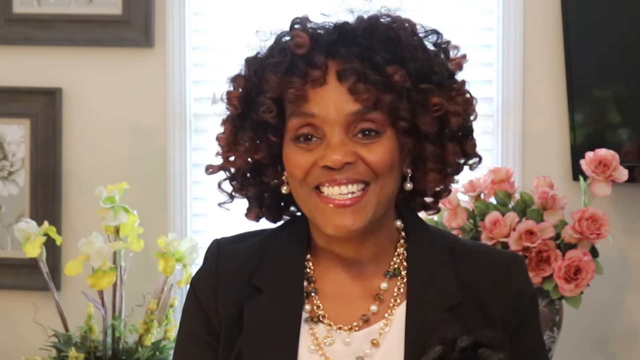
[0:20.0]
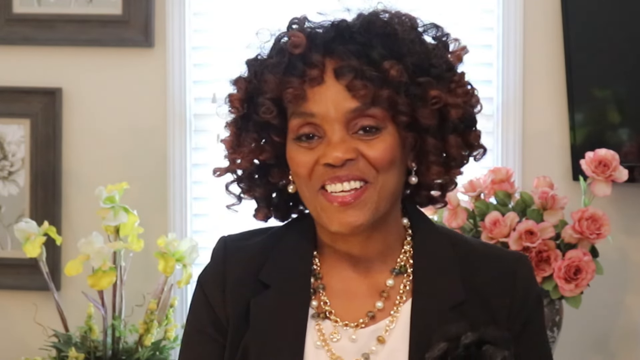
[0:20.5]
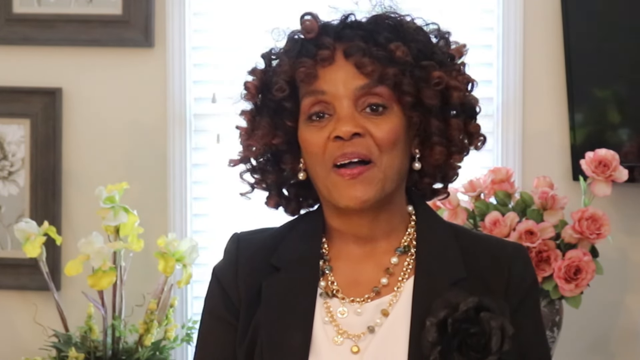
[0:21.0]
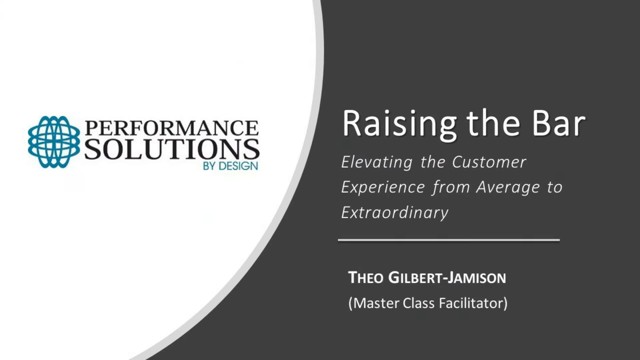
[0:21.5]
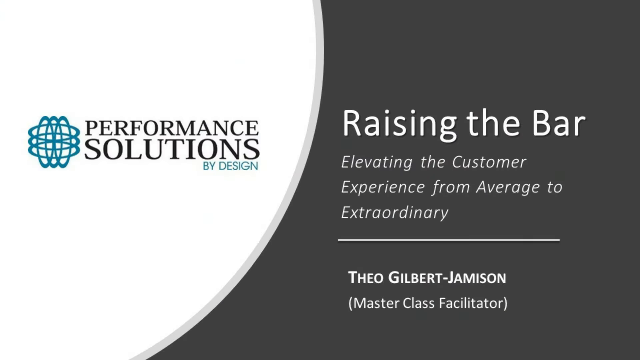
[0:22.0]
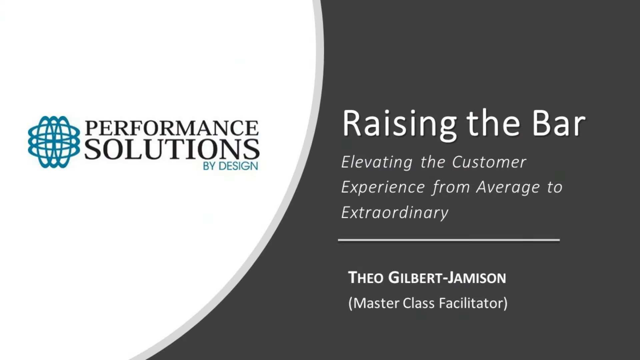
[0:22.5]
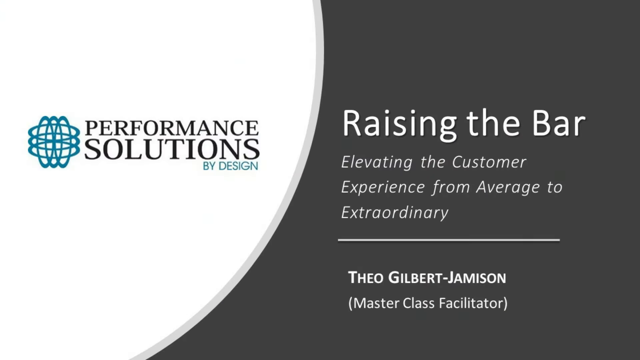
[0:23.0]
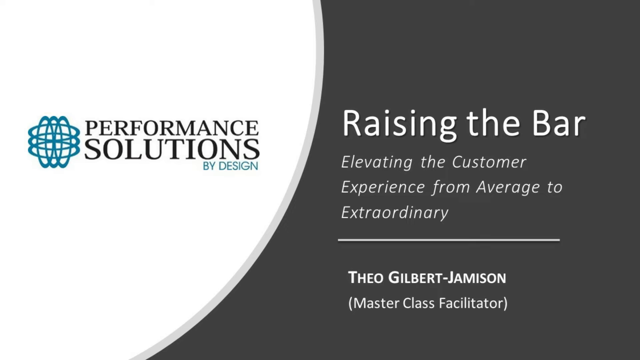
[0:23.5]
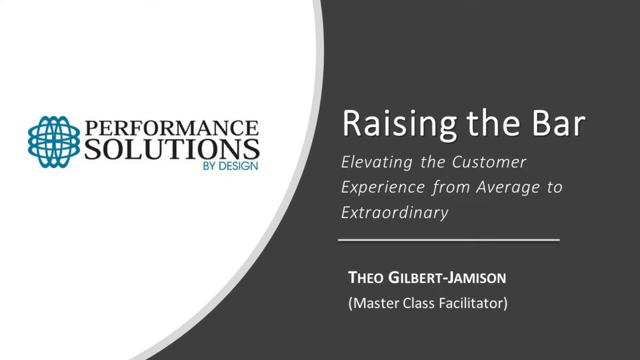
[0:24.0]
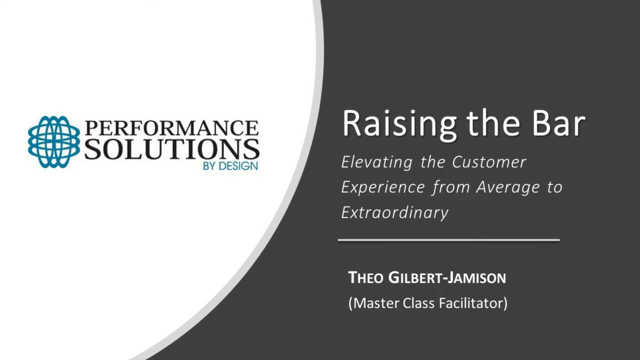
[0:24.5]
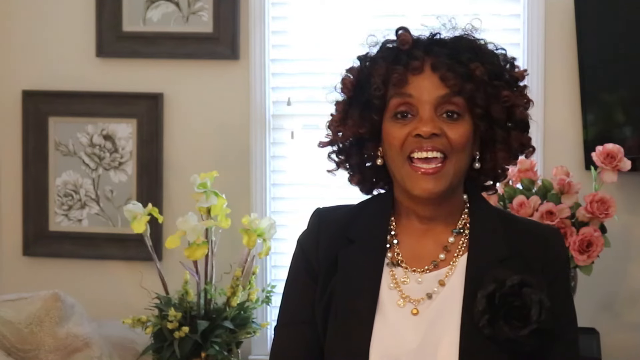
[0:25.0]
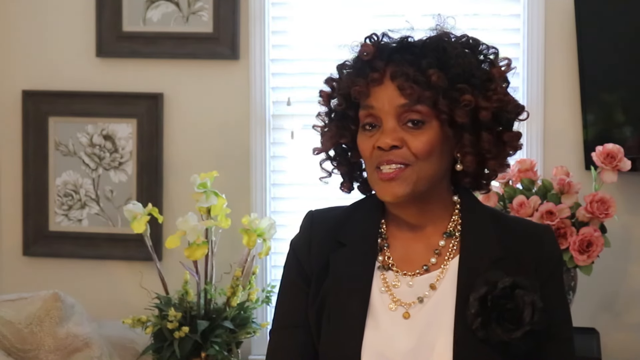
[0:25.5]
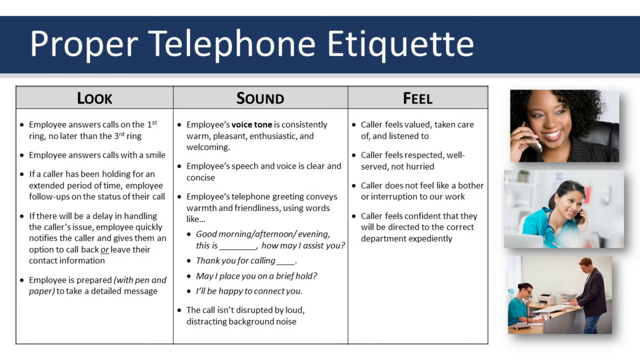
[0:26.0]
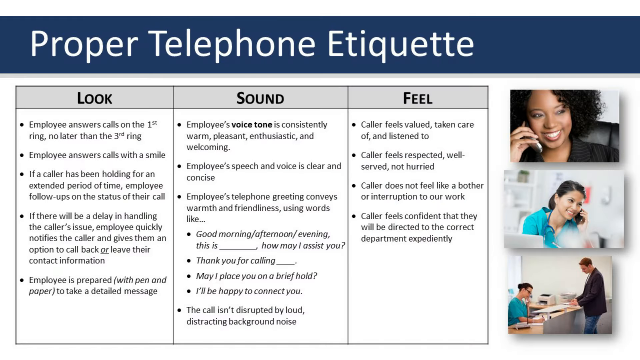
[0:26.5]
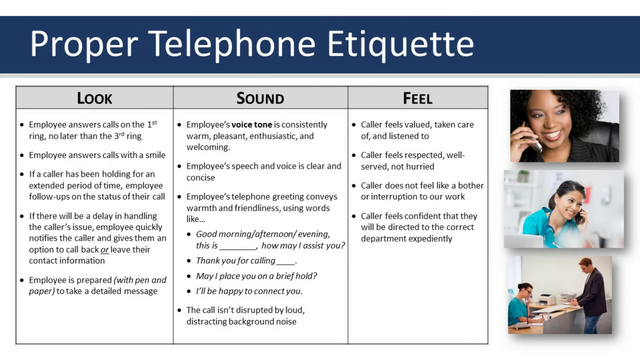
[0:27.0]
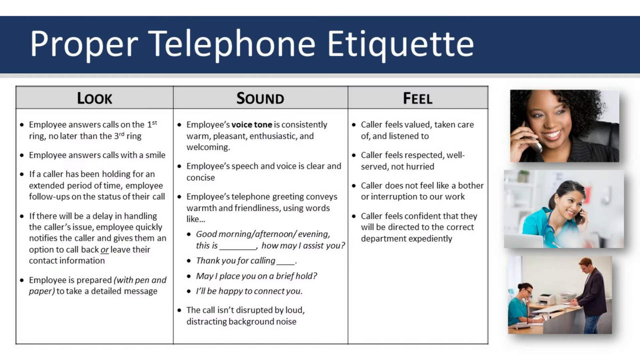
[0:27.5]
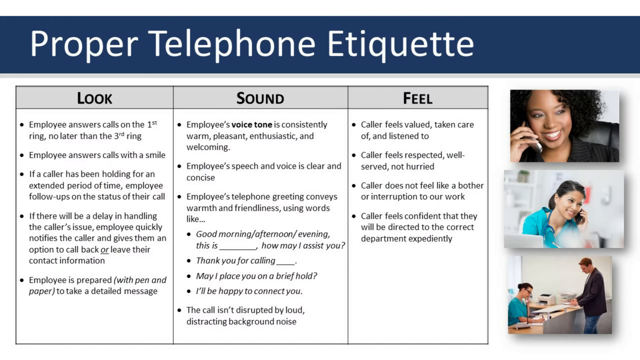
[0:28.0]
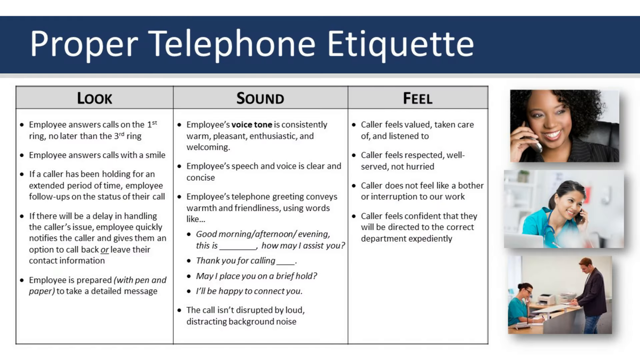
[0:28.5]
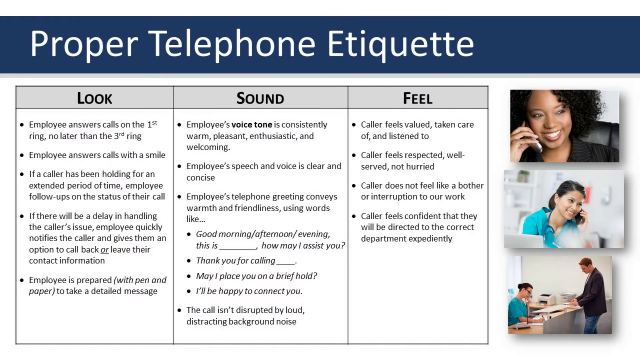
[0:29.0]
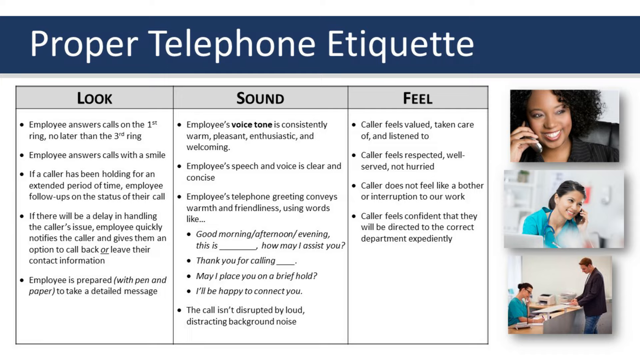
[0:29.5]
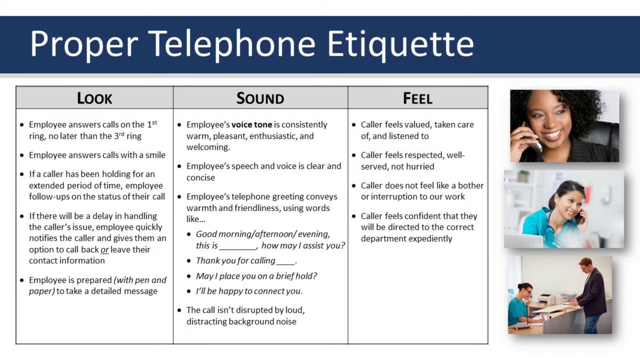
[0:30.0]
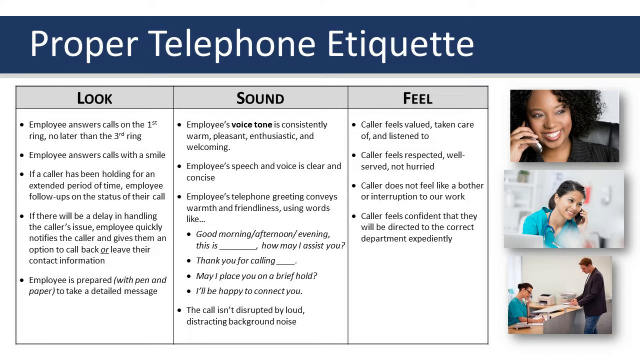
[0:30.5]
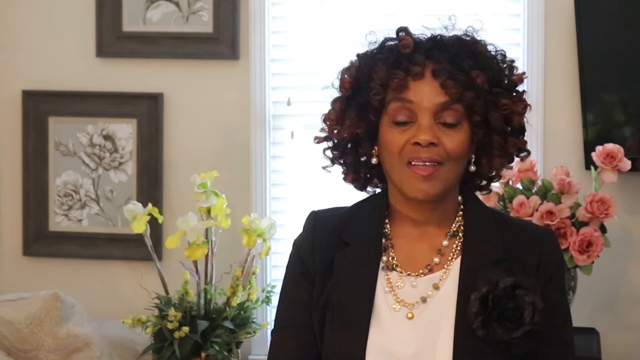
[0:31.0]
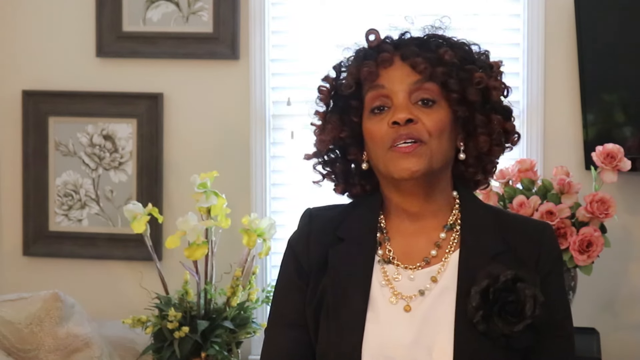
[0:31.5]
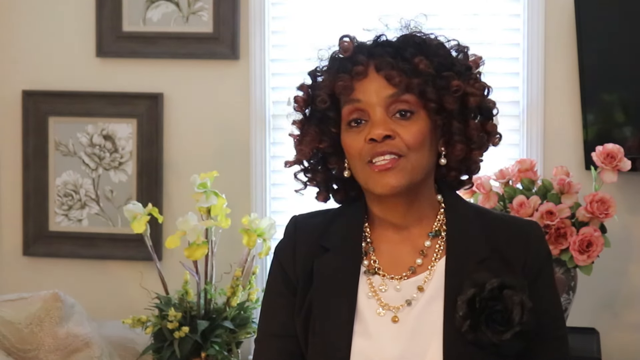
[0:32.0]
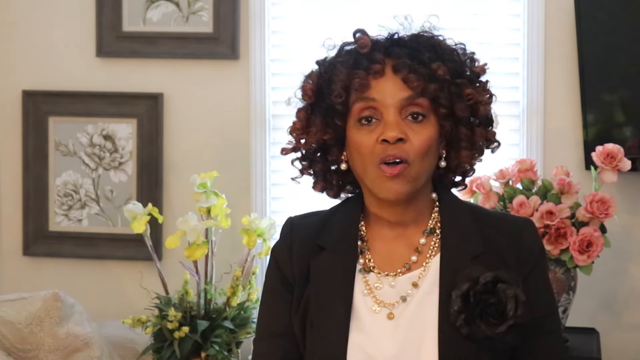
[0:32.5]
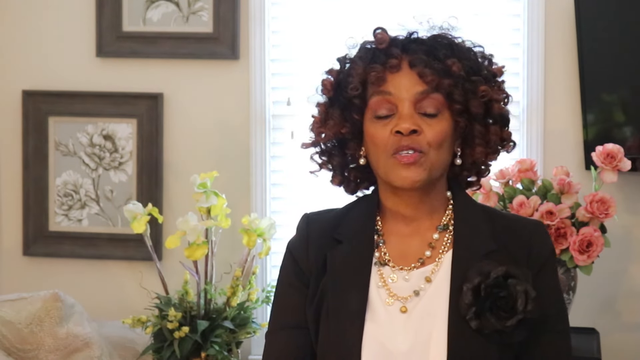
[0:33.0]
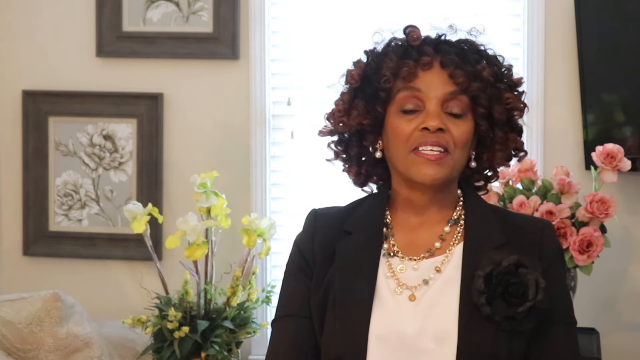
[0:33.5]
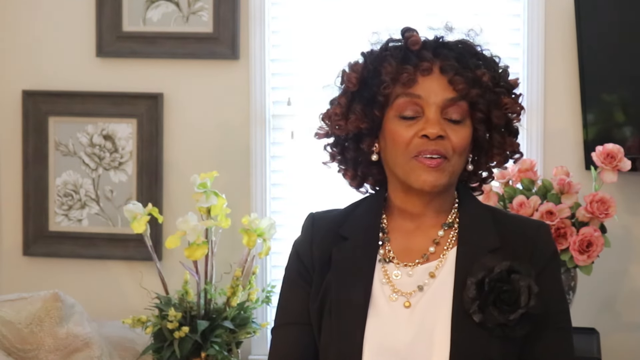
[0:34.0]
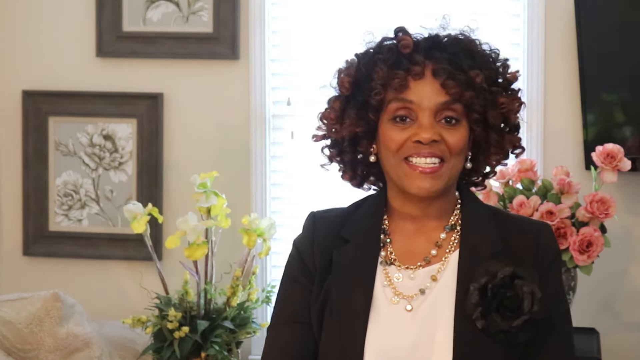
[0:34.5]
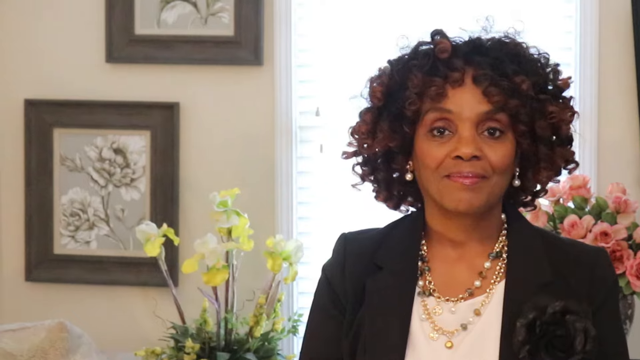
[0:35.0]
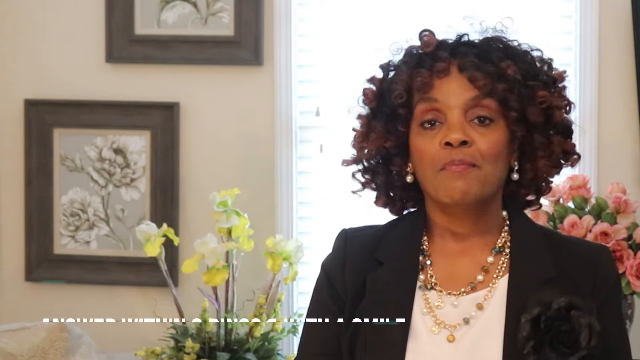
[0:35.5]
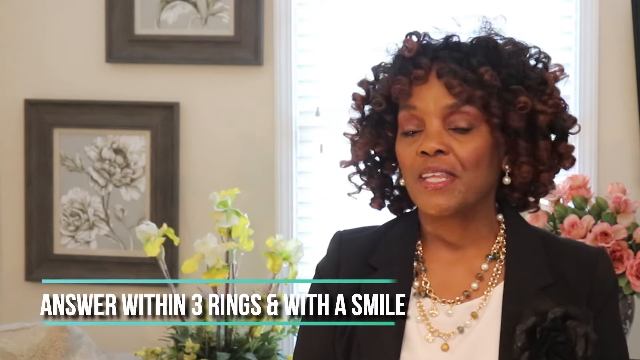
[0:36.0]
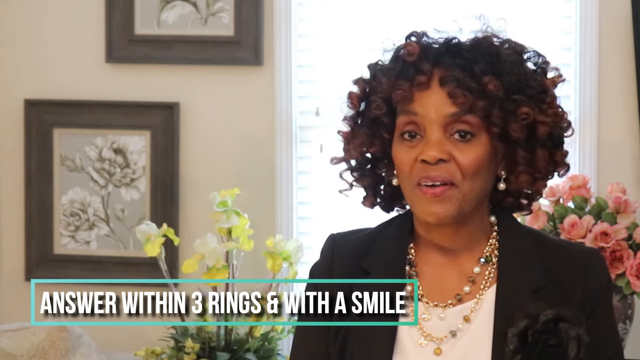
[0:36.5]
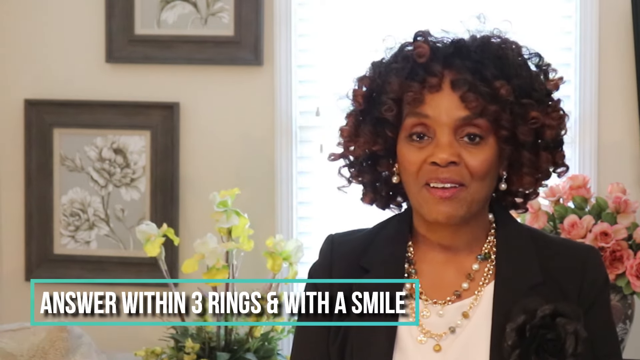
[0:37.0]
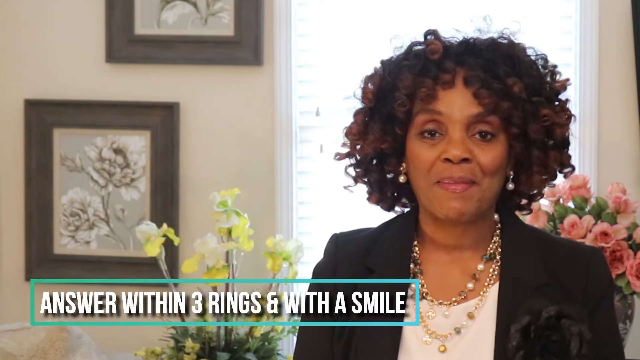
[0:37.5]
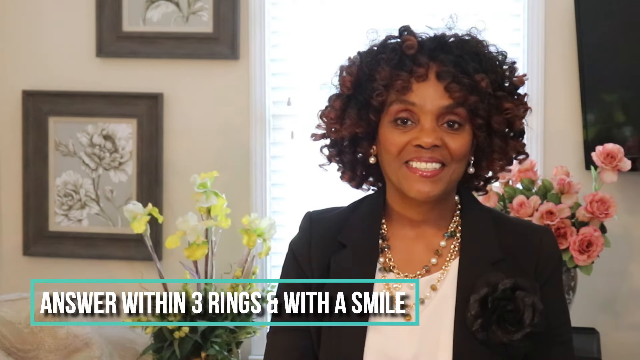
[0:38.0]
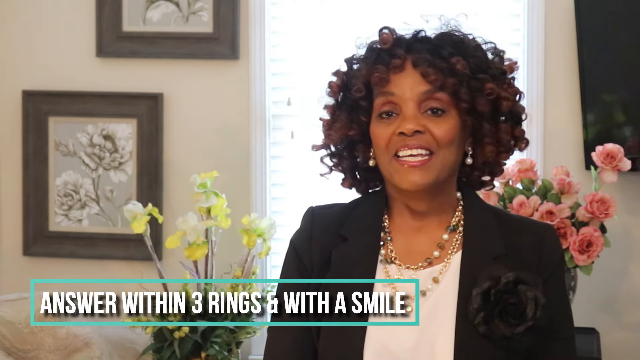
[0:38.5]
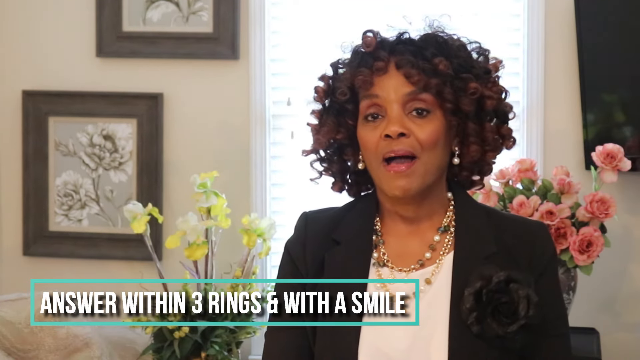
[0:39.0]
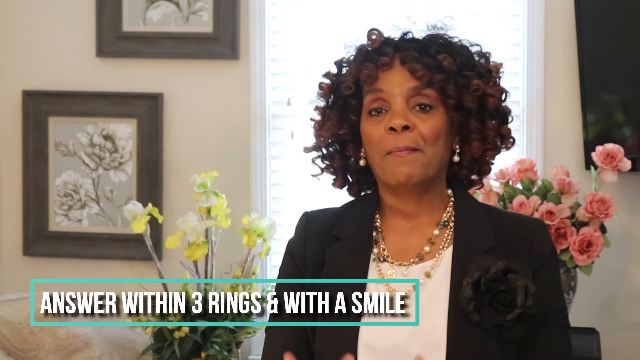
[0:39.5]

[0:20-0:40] The woman speaks, smiling a lot. Text reads "performance solution by design" and "elevating the customer experience from average to extraordinary," along with "Theo Gilbert Jameson master class facilitator," apparently the woman's name. A page titled "proper telephone etiquette" with the headings "look sound feel" lists: "Employees answer a call in the first ring, no later than the third ring. Employee answers call with a smile. If a caller has been holding for an extended period of time, employee follow-ups on the status of their call. If there would be a delay in handling the caller's issue, employee quickly notifies the caller and gives them an option to call back or leave their contact information. Employee is prepared with pen and paper to take a detailed message. Employee's voice tone is consistently warm, pleasant, enthusiastic, and welcoming. Employee's speech and voice is clear and concise. Employee's telephone greeting conveys warmth and friendliness using words like good morning, afternoon, evening. This is blank. Thank you for calling. I'll place you in a brief hold. I'll be happy to connect you. The call isn't disrupted by loud distracting background noise."